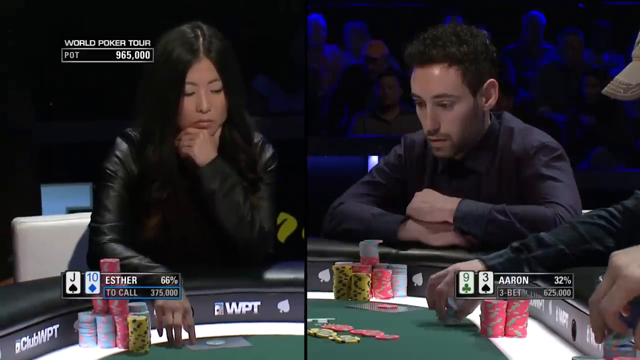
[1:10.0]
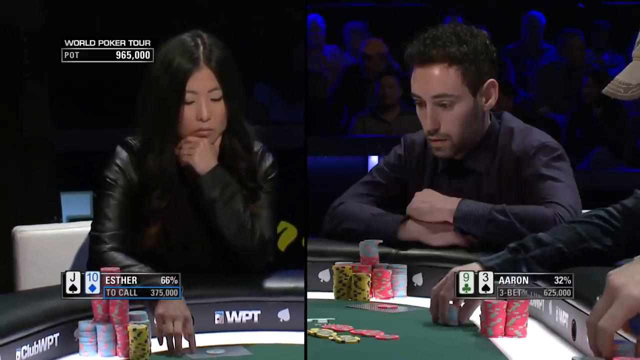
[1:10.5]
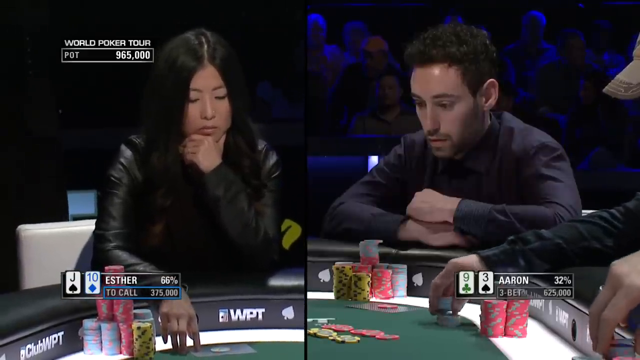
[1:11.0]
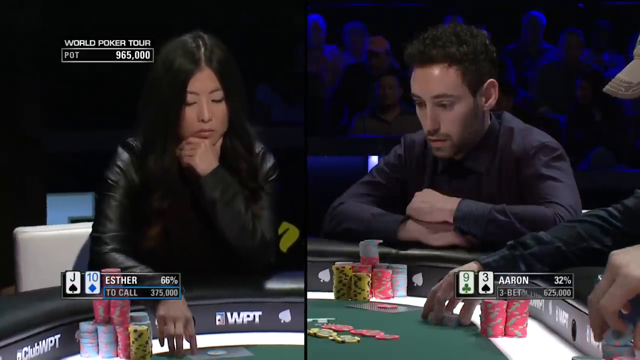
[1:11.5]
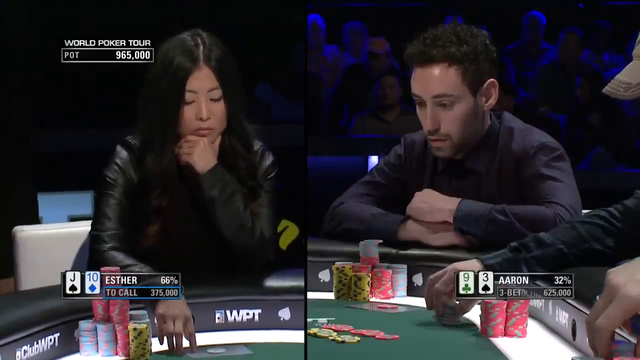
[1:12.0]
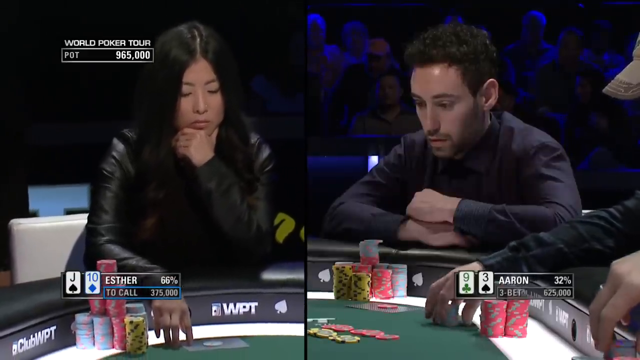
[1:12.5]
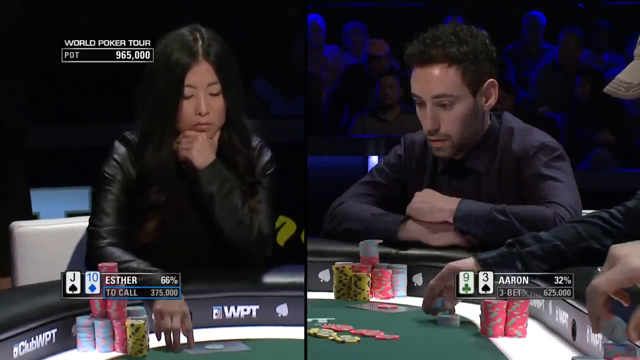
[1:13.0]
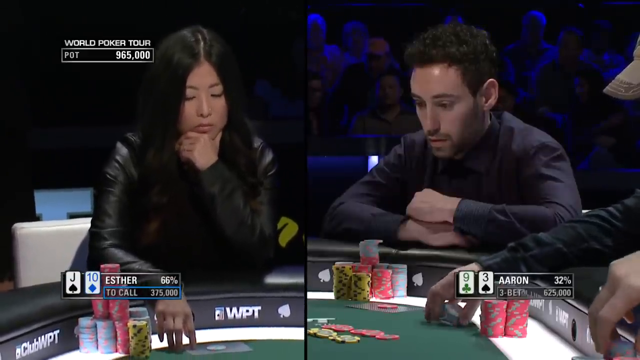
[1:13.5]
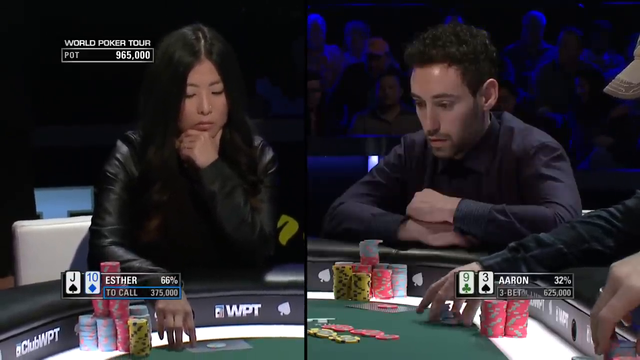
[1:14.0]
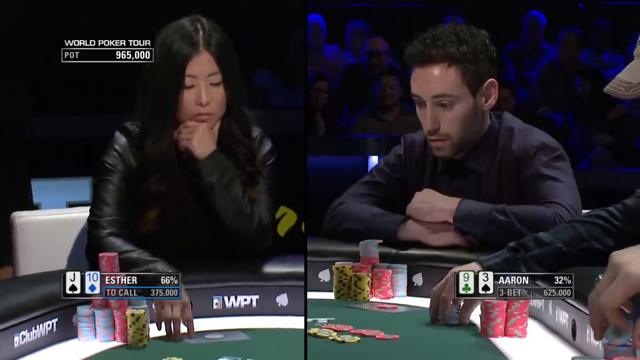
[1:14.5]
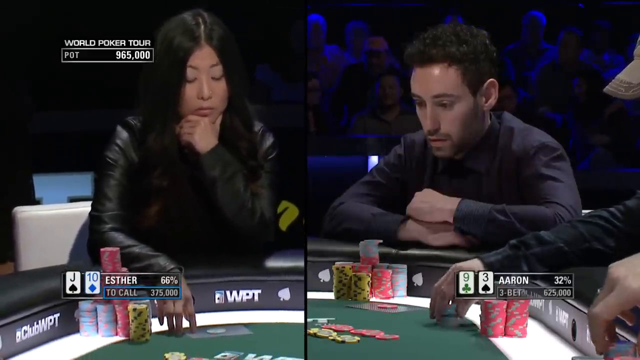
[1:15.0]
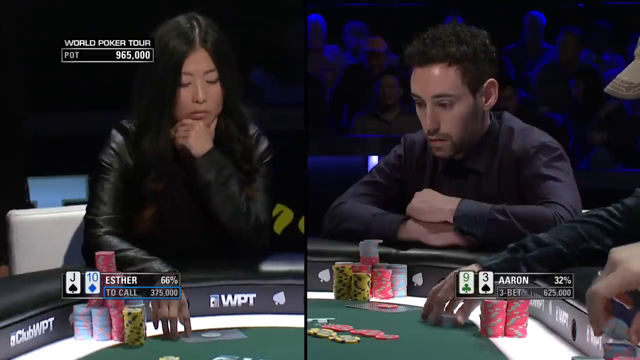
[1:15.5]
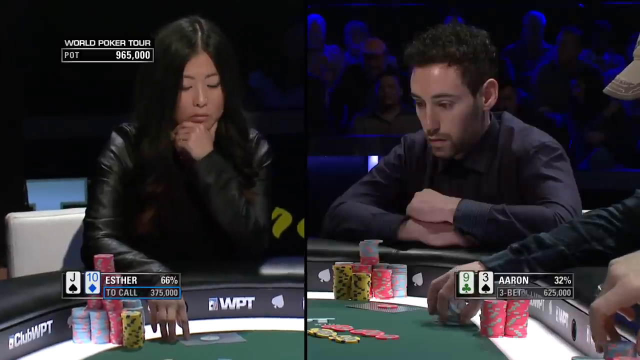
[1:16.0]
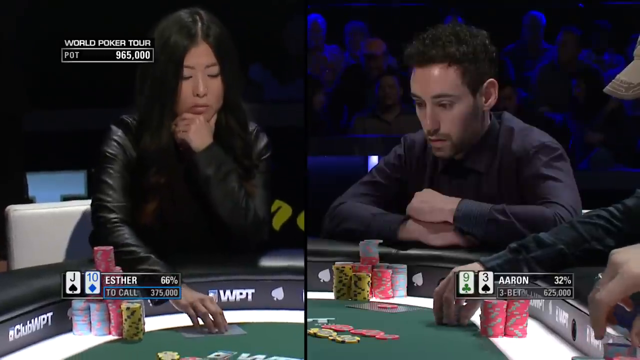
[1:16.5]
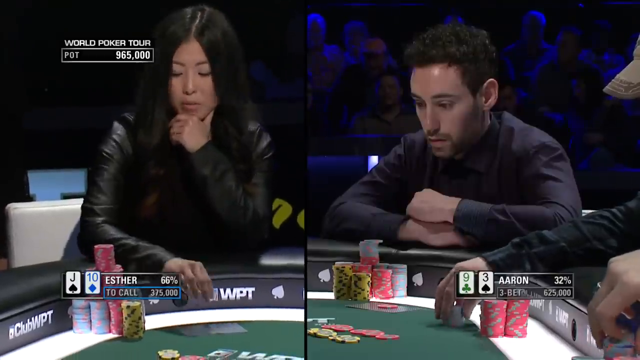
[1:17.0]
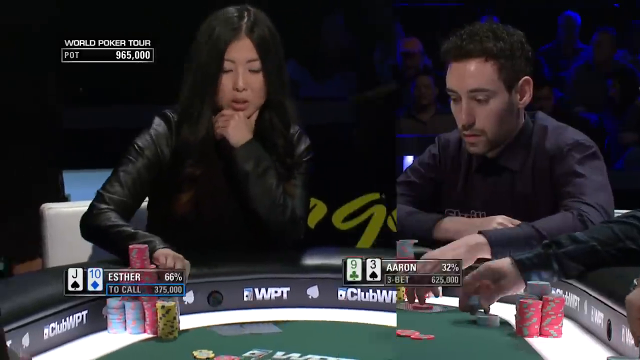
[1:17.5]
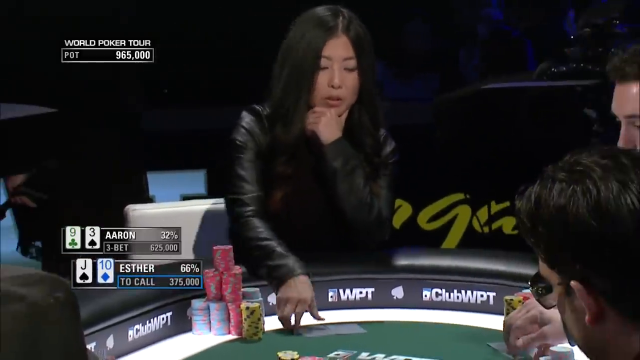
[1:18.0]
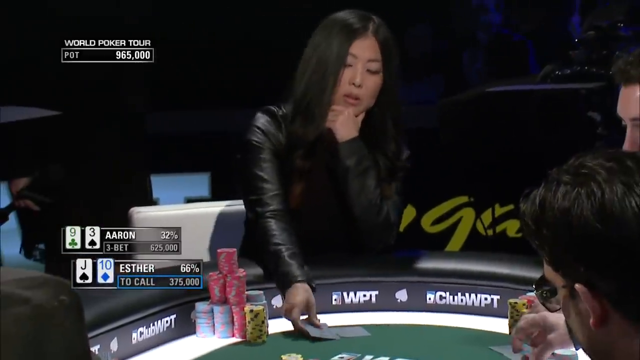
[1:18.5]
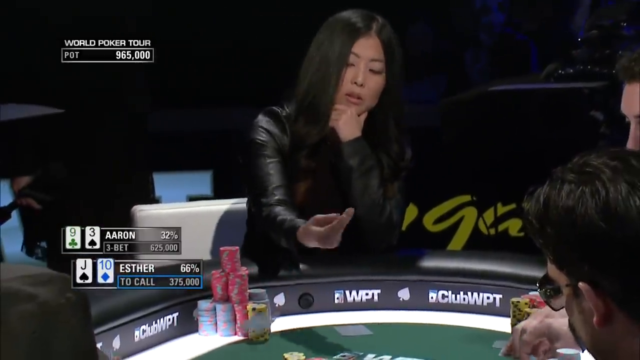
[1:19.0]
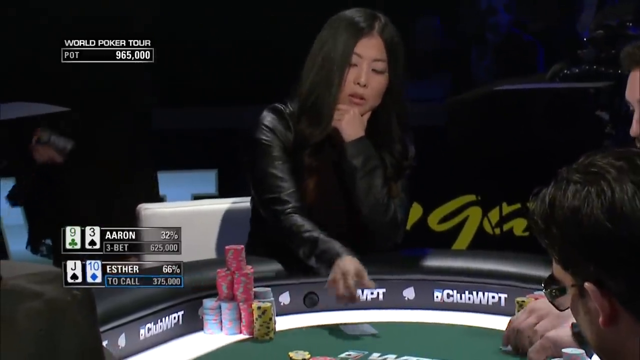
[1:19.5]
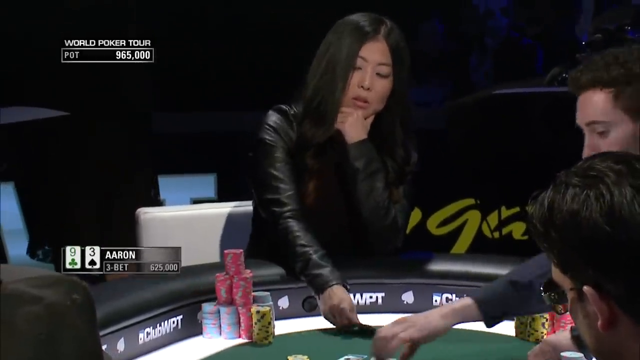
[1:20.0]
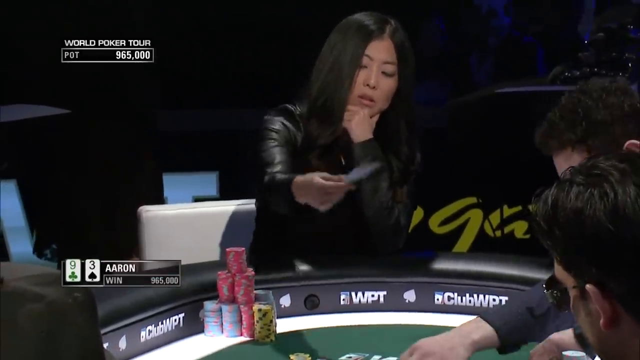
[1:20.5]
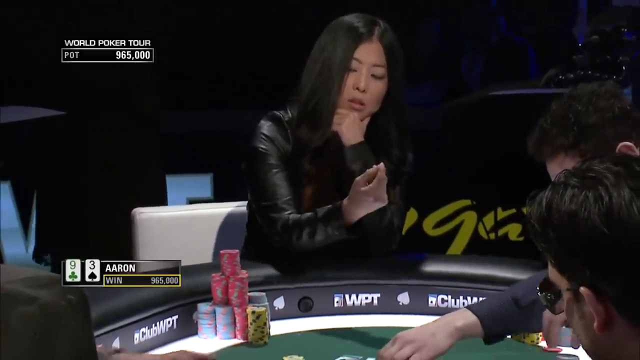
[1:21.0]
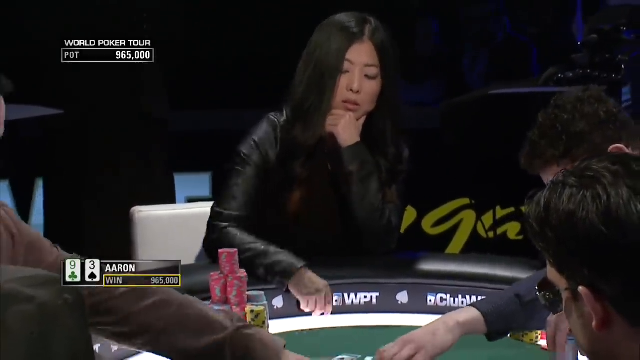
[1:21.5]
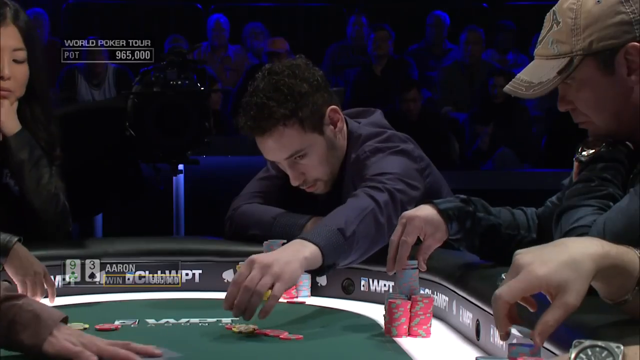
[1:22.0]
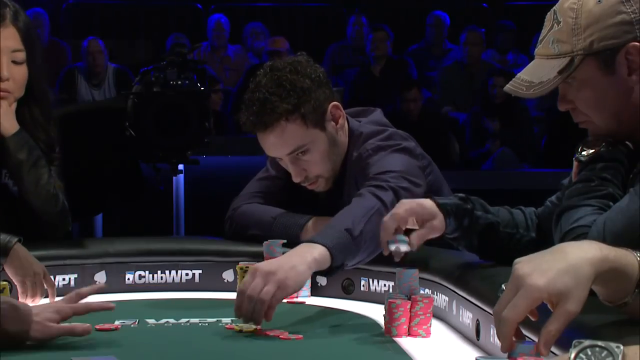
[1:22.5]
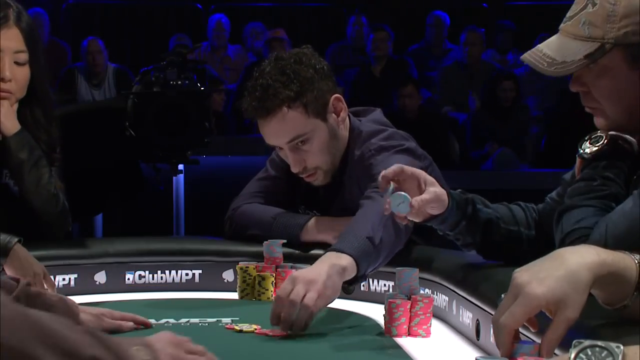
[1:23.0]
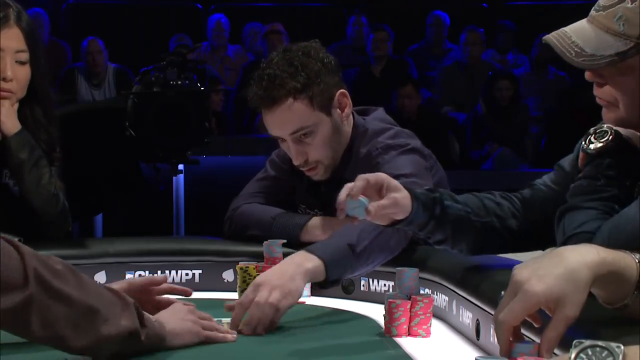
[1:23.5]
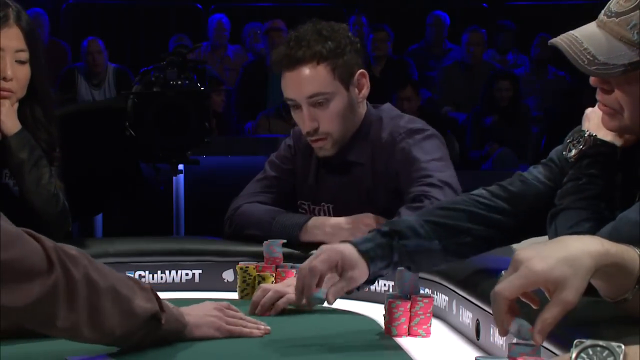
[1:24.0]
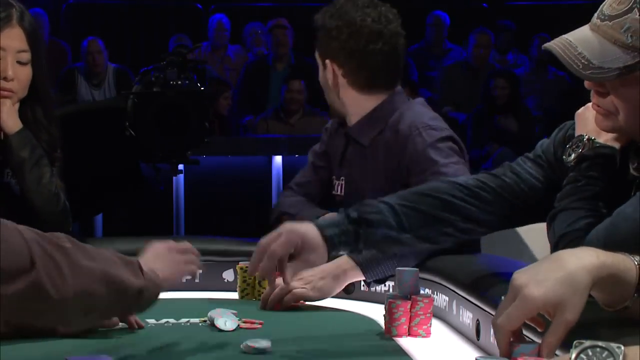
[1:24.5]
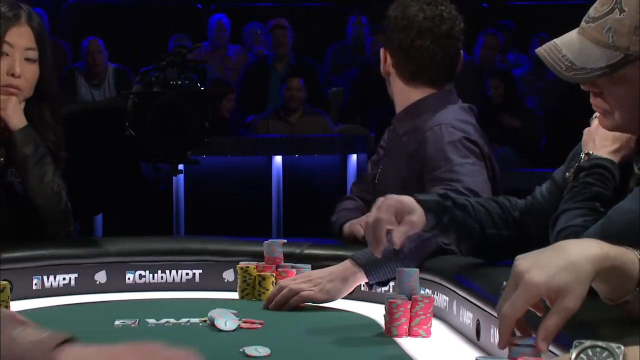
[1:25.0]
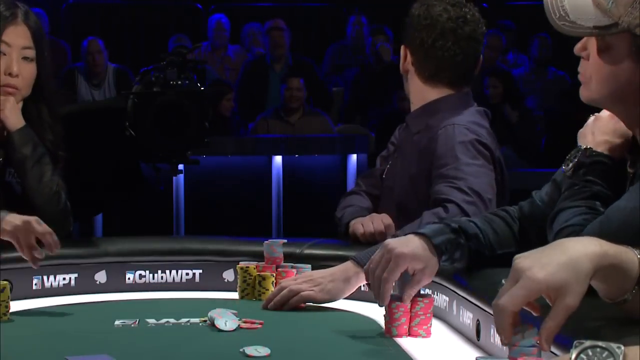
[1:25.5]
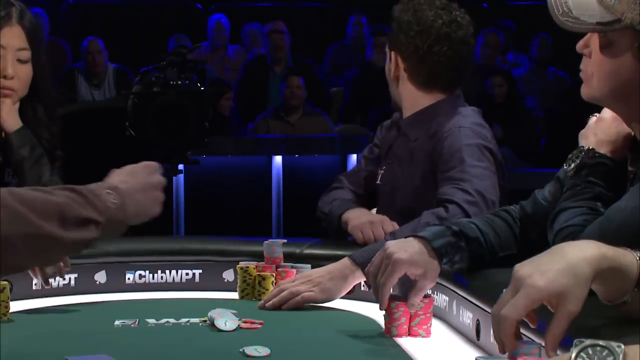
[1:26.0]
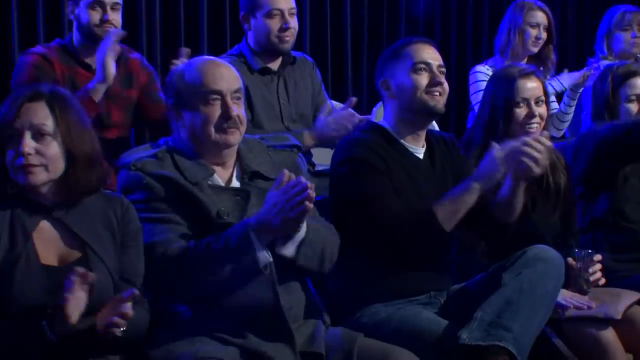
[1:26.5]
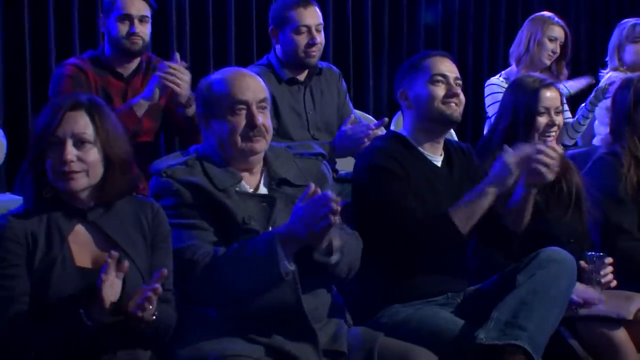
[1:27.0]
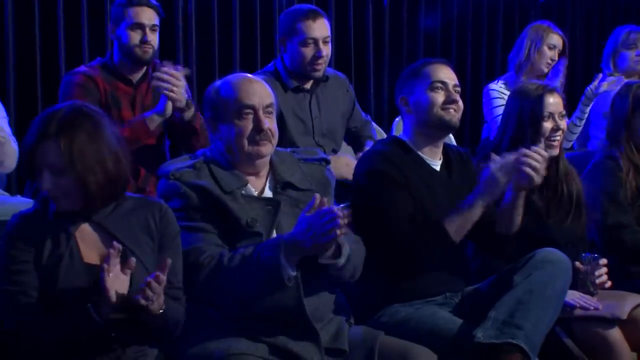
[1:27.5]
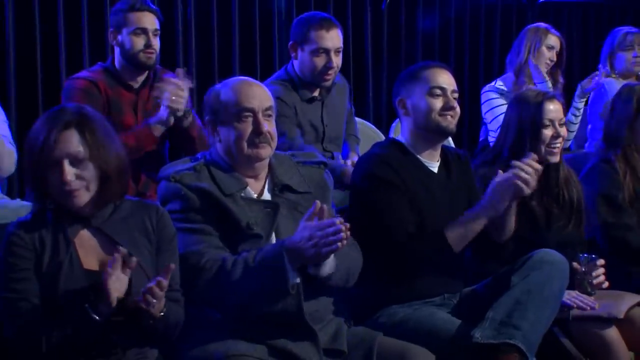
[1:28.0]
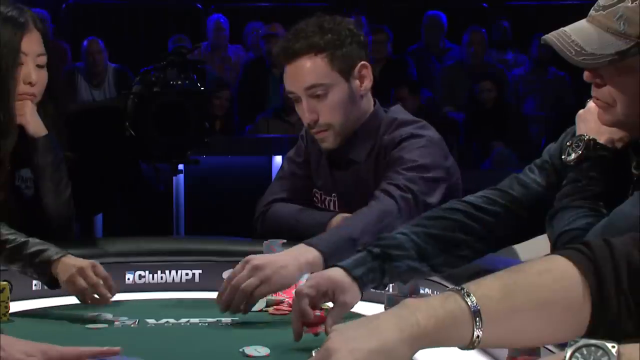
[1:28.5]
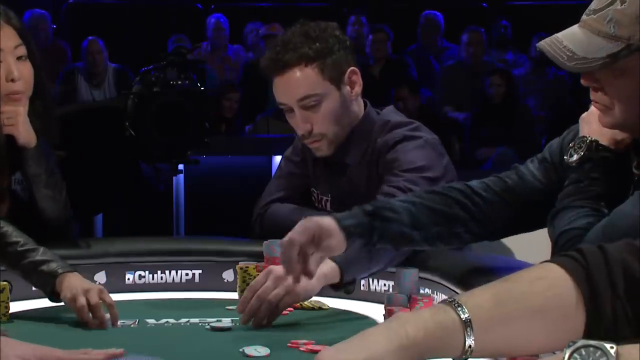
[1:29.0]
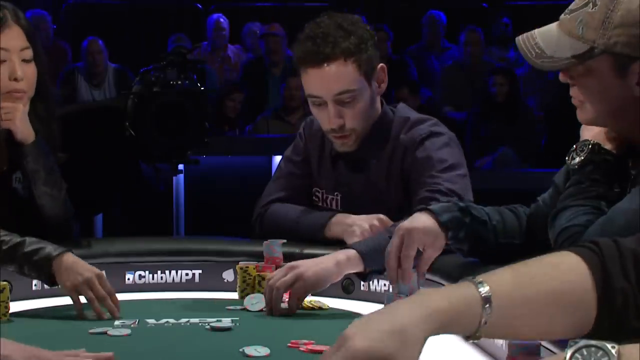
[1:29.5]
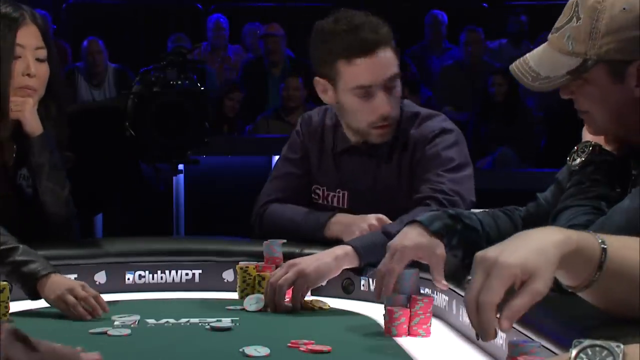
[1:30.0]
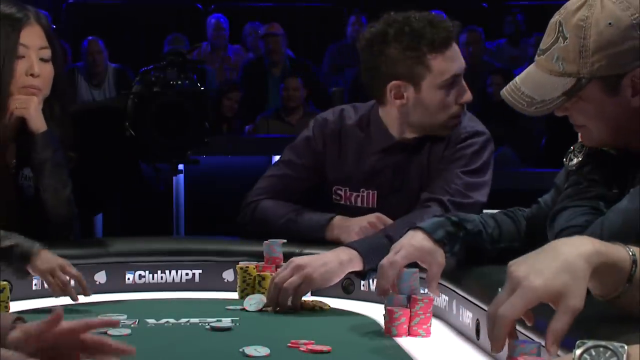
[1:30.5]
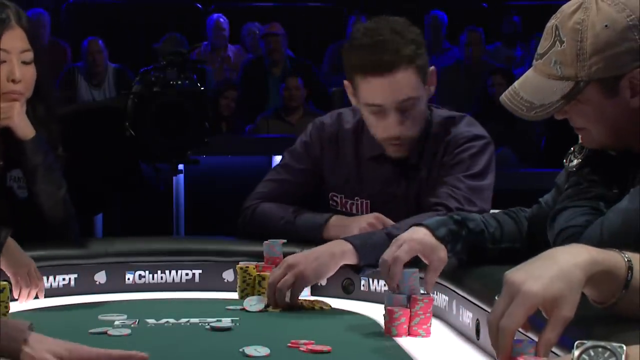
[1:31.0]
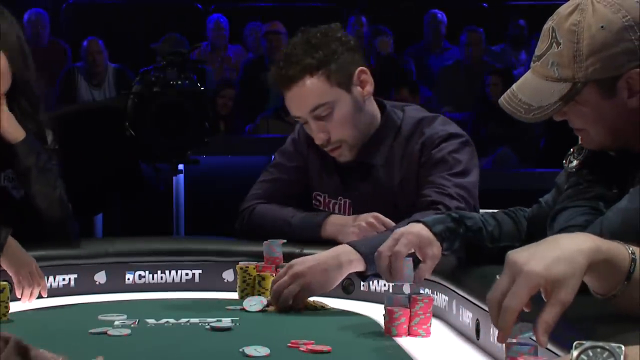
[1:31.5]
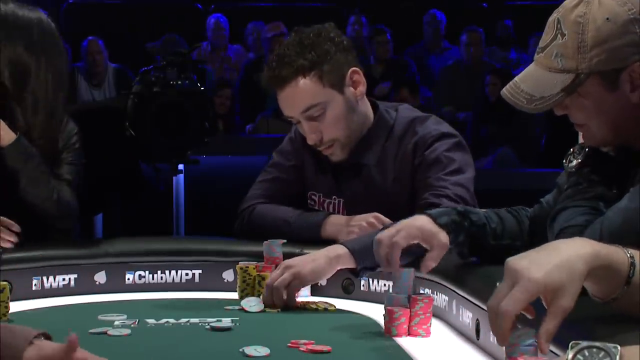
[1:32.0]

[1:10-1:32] The split screen between Esther and Aaron continues. Esther has a call of 375,000 with 66%. A J card and a 10 card are played. On the right, Aaron has a 32% chance with a 3 bet of 625,000. Both seem kind of nervous and questioning their next moves. Aaron has a blank stare, while Esther makes small facial movements. Esther throws a card onto the poker table, and Aaron grabs his poker chips and looks back. A group of people clap, and he looks back, appearing to be in shock. He wears a necklace. The people sitting in the crowd appear to be older and middle-aged.